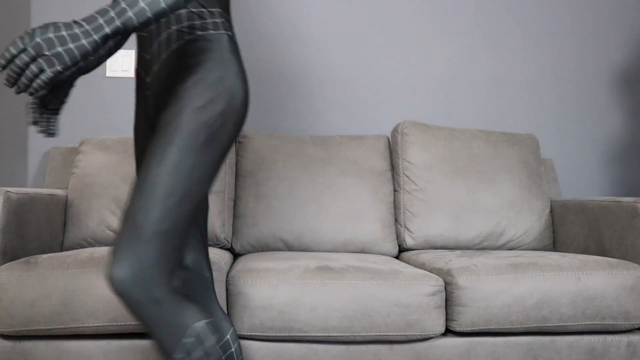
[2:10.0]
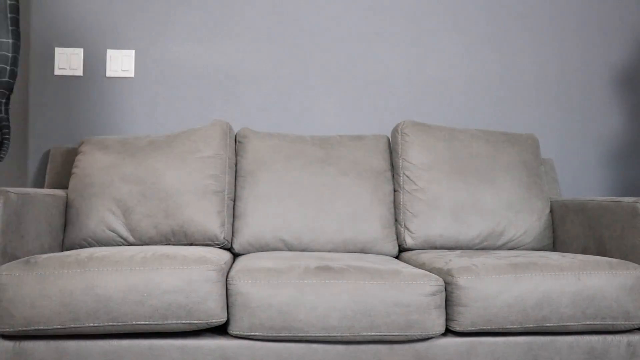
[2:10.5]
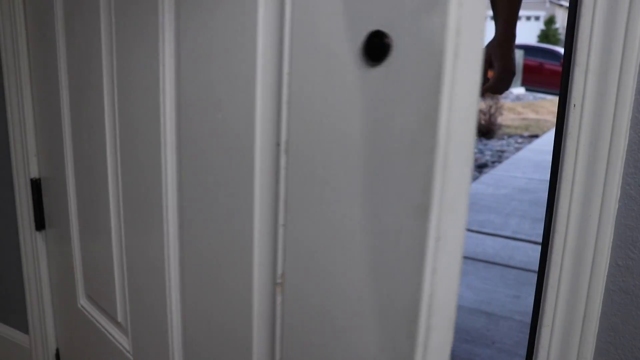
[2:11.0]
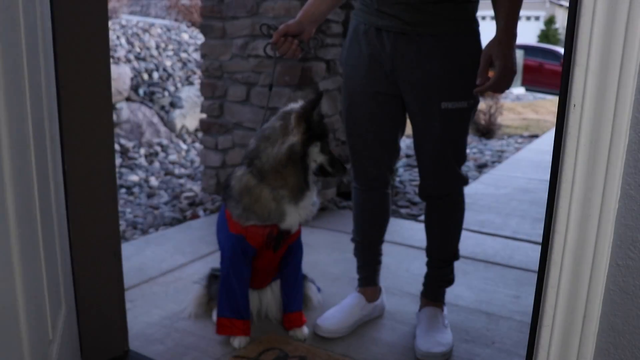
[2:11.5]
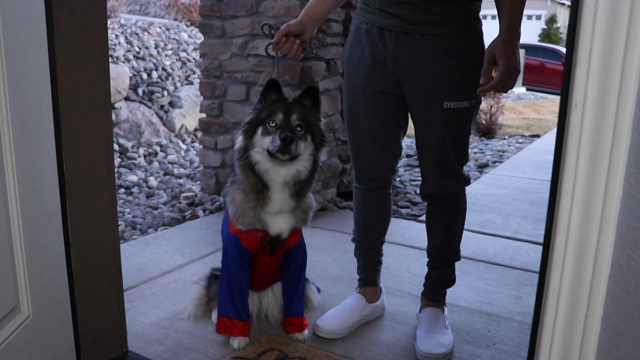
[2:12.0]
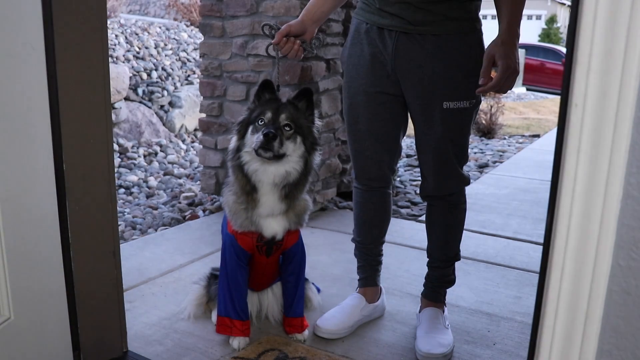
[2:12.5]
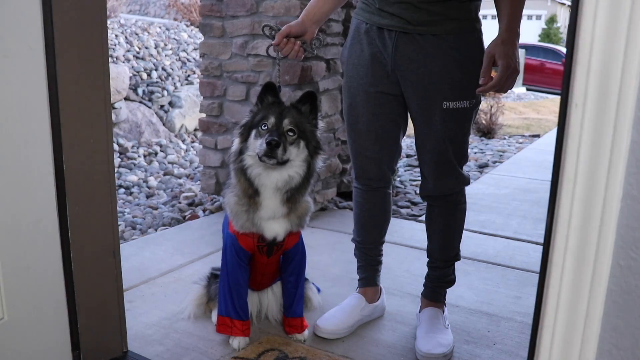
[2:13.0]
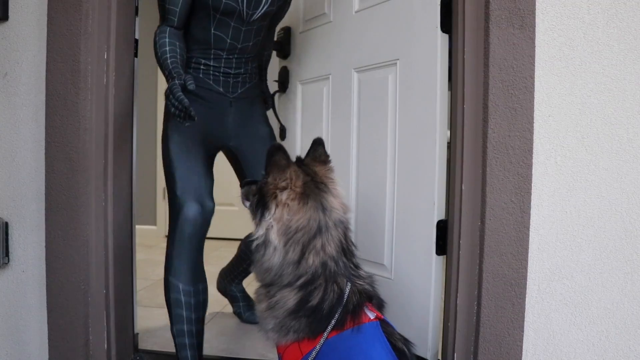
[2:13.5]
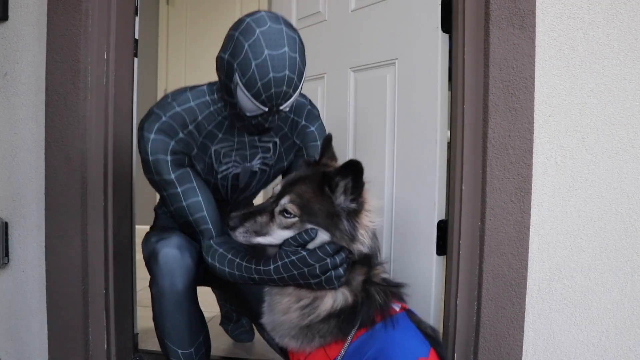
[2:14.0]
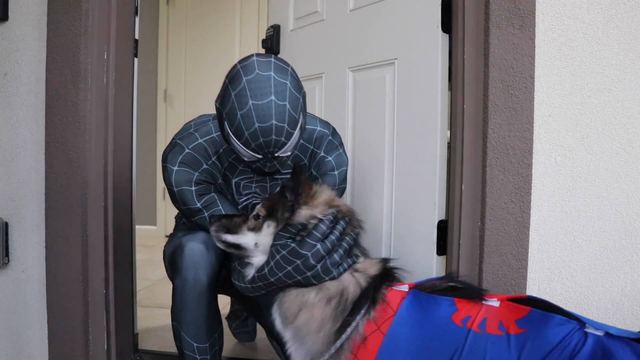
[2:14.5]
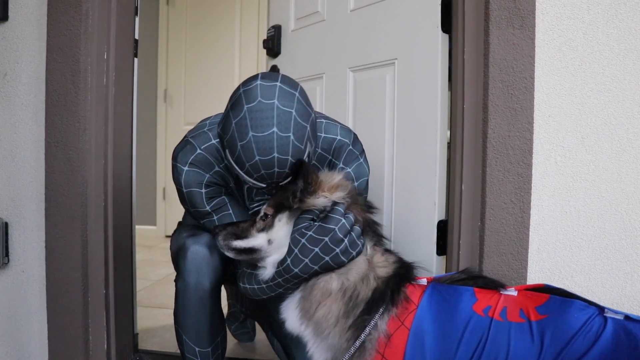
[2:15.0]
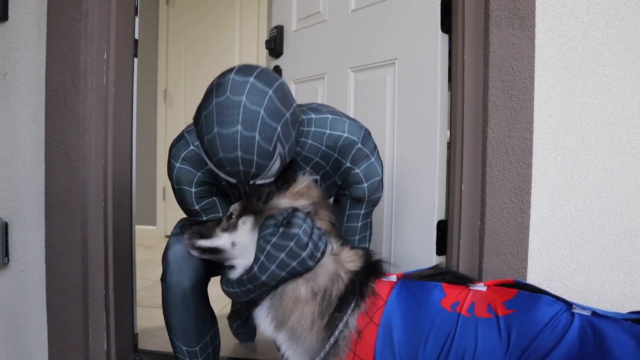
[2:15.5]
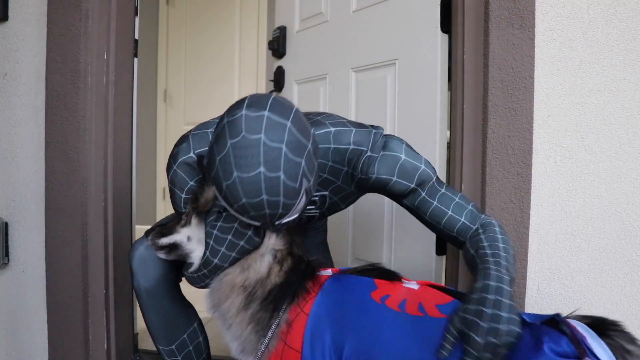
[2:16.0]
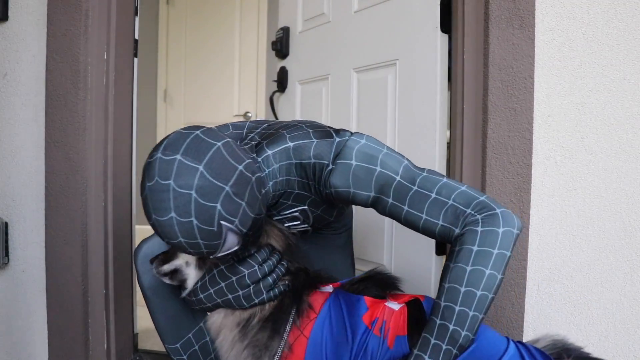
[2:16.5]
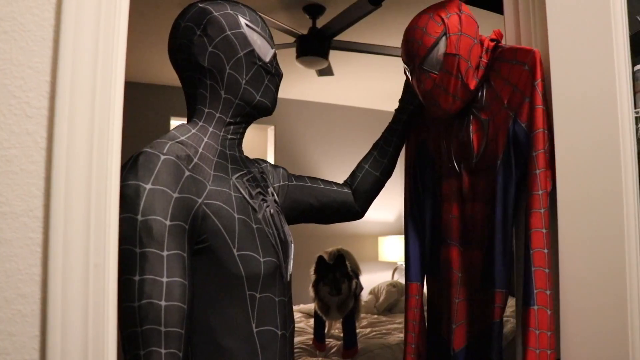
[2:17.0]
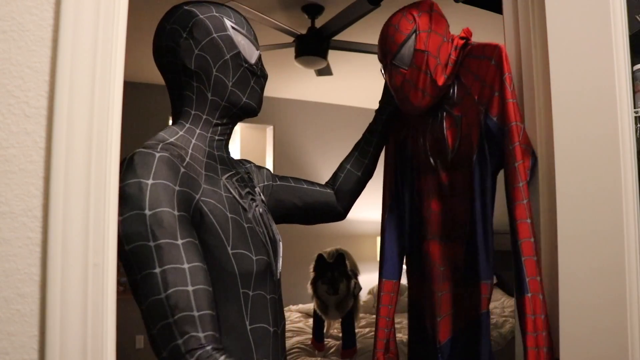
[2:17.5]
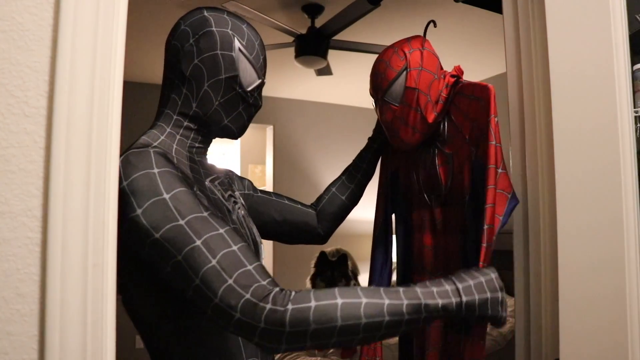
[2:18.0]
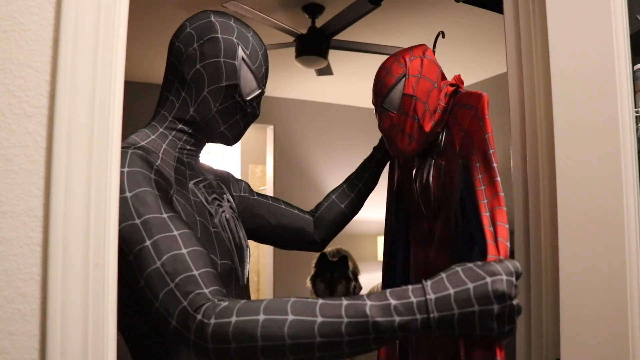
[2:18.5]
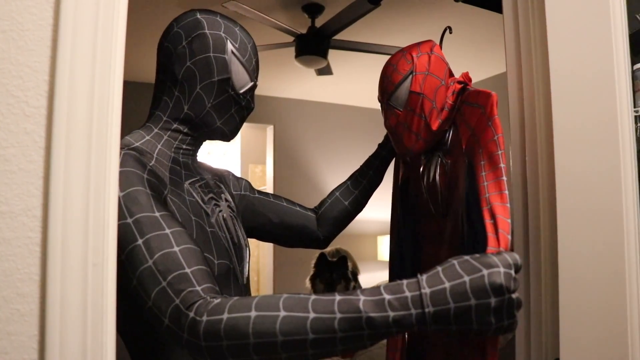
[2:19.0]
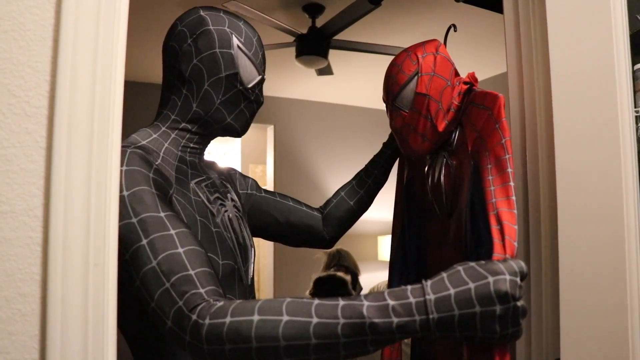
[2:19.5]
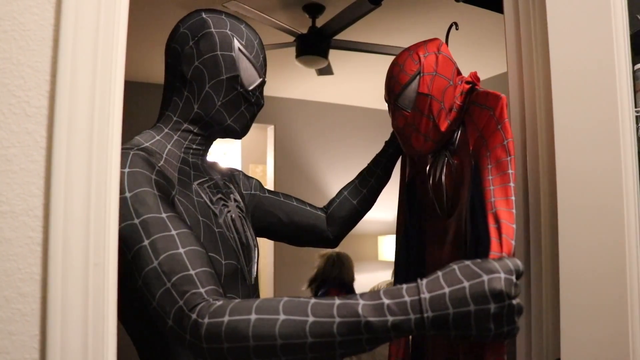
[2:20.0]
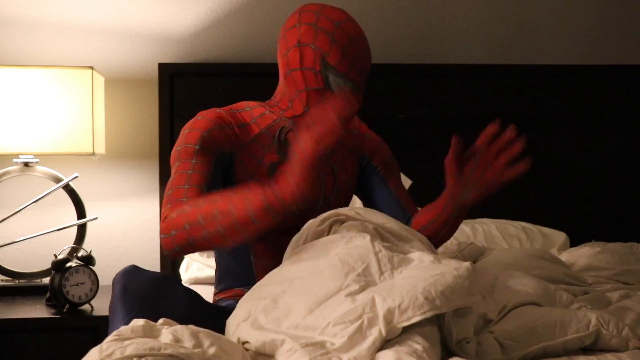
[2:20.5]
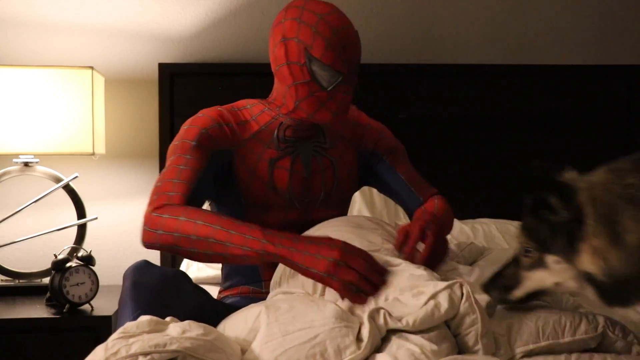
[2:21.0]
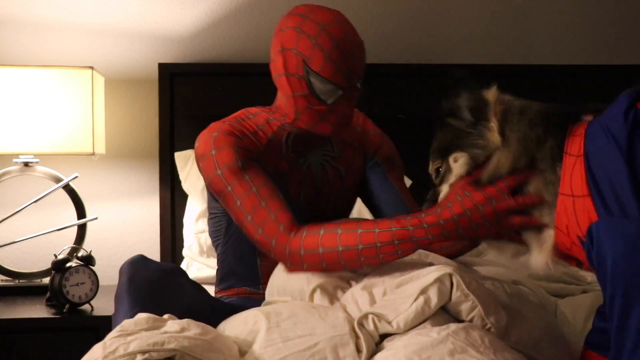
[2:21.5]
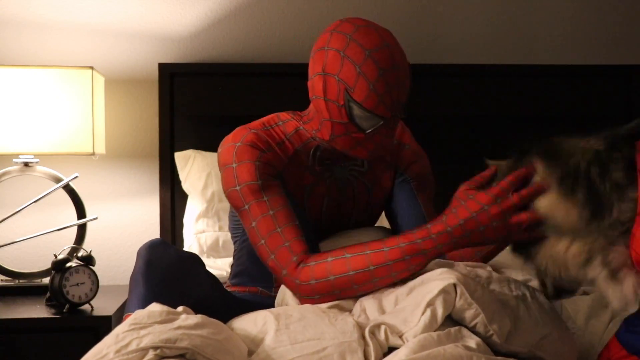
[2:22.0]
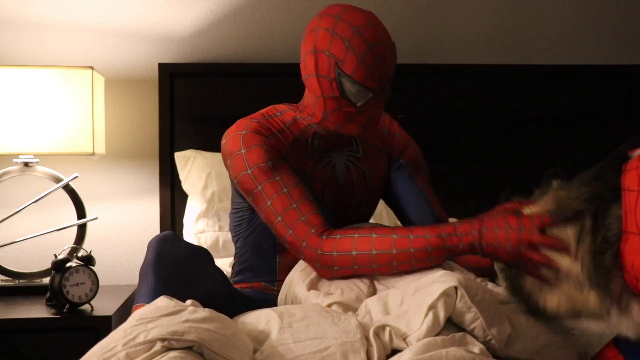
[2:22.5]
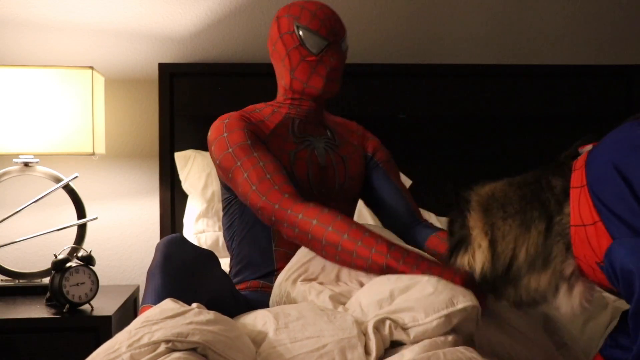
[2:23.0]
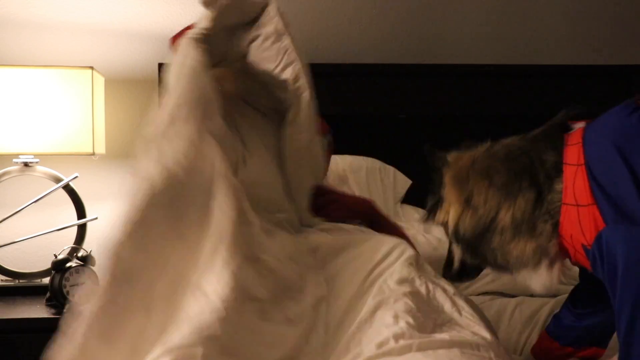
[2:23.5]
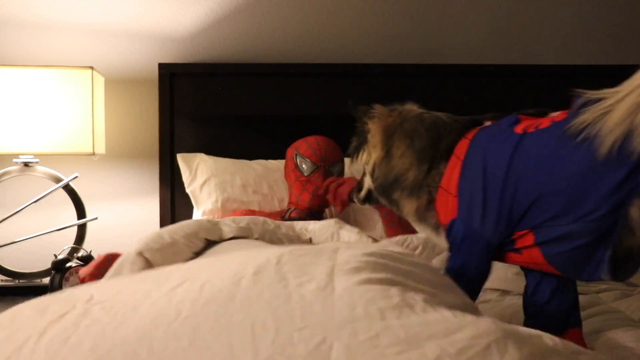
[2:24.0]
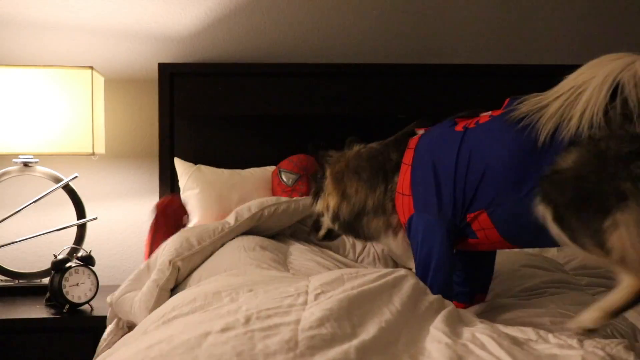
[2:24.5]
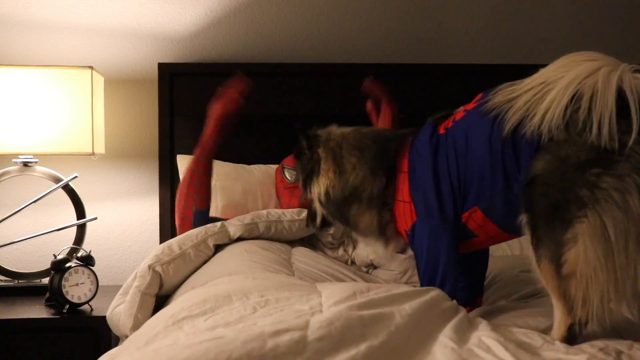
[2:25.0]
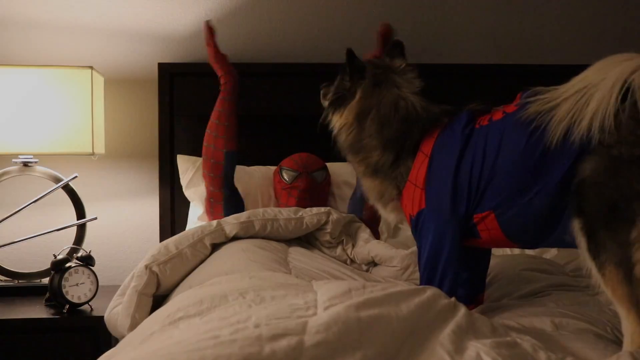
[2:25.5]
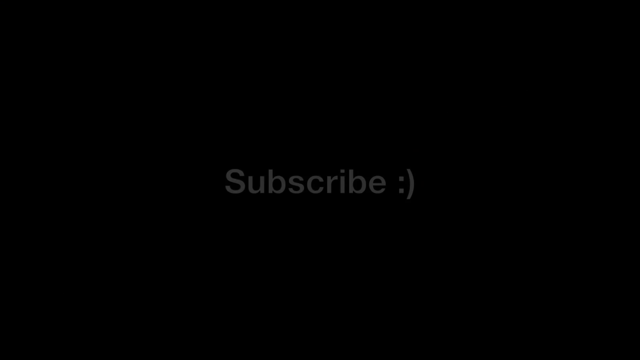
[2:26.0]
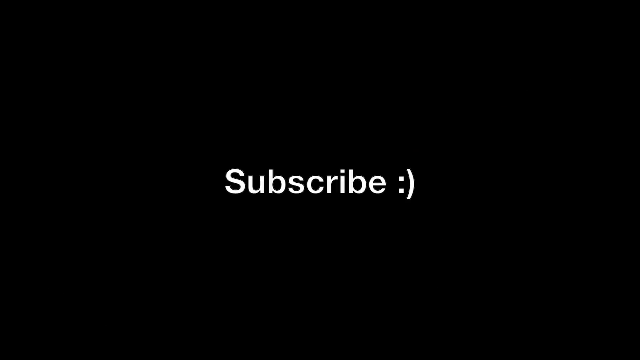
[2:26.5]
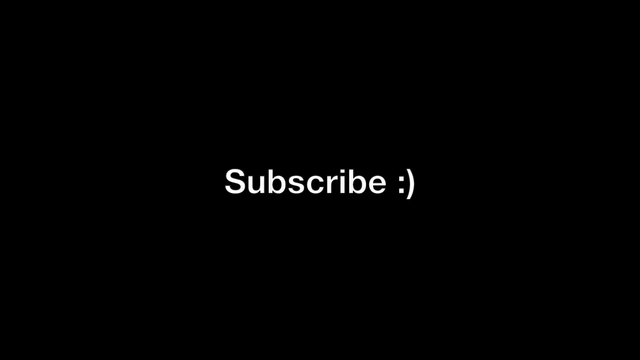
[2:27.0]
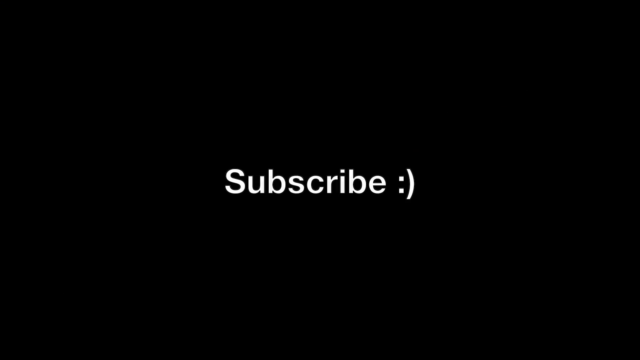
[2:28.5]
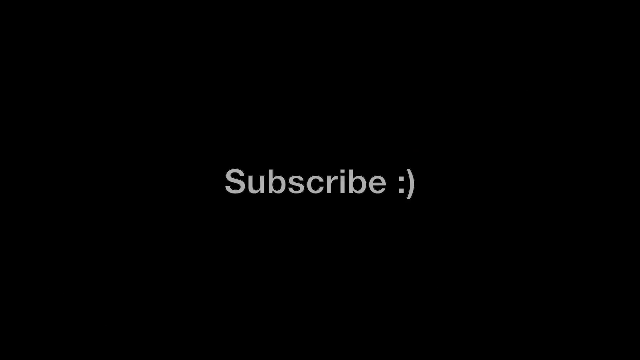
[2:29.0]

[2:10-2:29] Titled "The Life of Spider-Dog," the video shows Spider-Man opening the door to find his dog, brought to the door on a leash by a guy. Spider-Man is very happy to see the dog, leans over, kisses it on the head, and brings it into the house. He then looks at his red and blue Spider-Man outfit and changes into it from the gray one he was wearing. He gets ready for bed and gets in bed with the dog, rubs its head, and flips the pillow a little. The dog jumps on the bed, he pets it on the head, and he claps his hands to turn the lights out. Then "subscribe" flashes up on the screen.